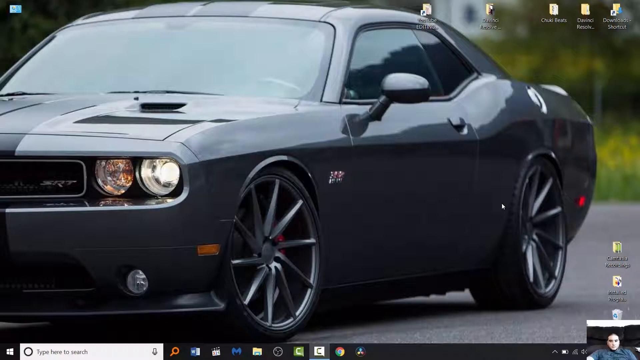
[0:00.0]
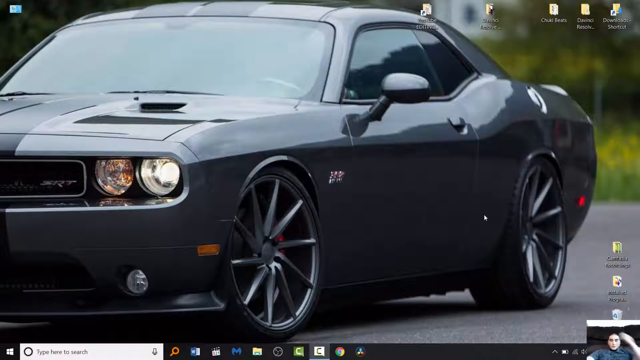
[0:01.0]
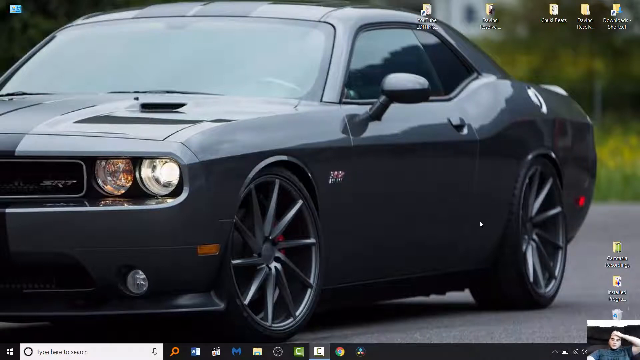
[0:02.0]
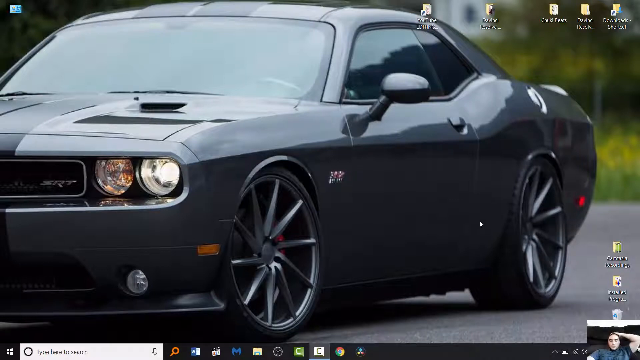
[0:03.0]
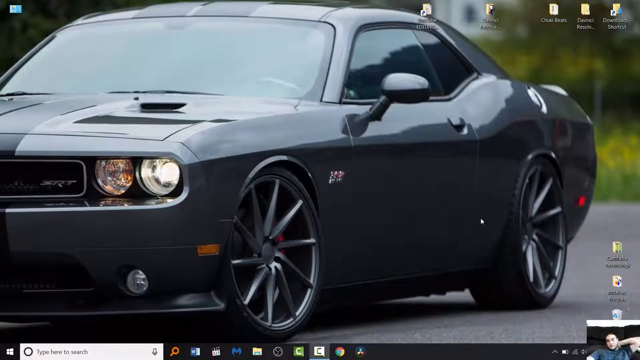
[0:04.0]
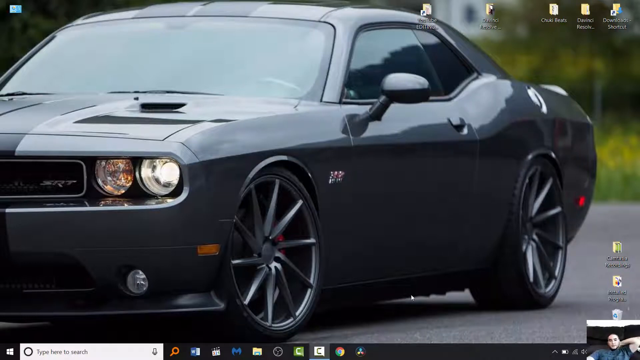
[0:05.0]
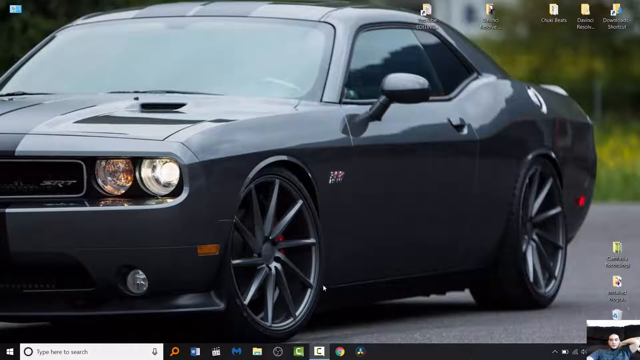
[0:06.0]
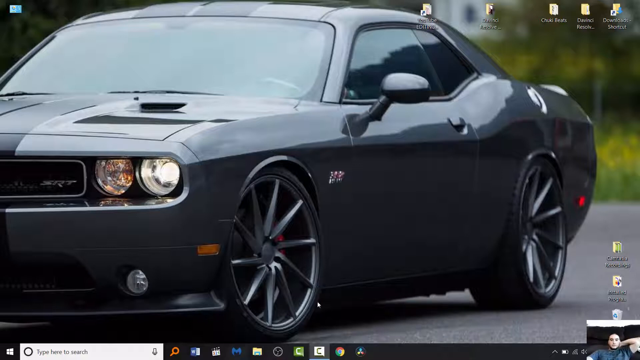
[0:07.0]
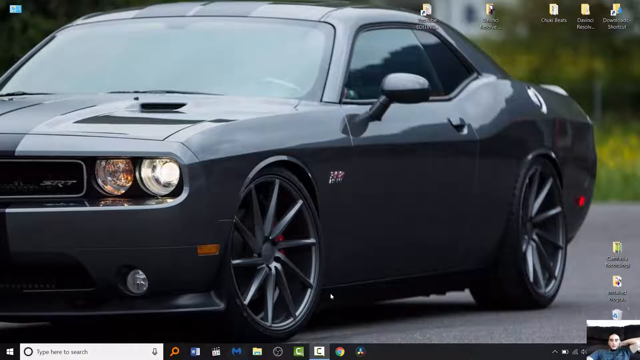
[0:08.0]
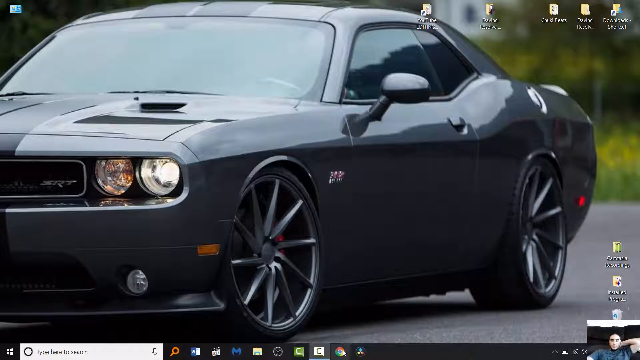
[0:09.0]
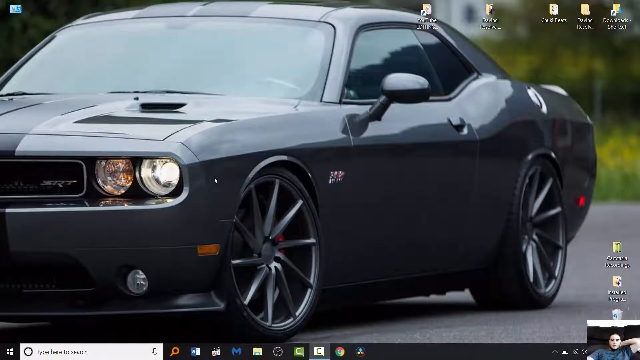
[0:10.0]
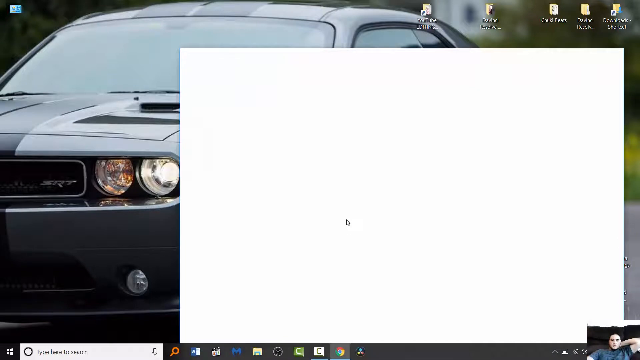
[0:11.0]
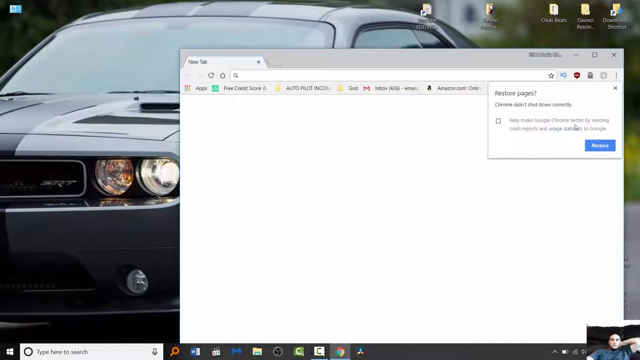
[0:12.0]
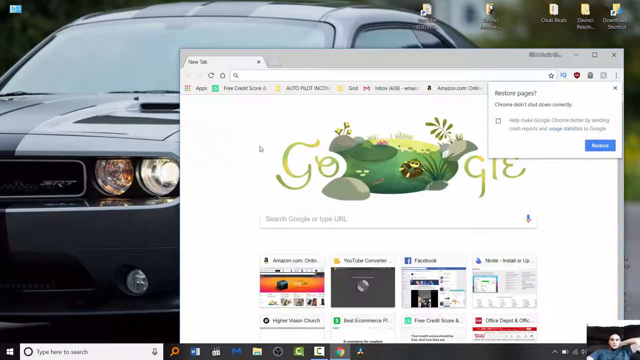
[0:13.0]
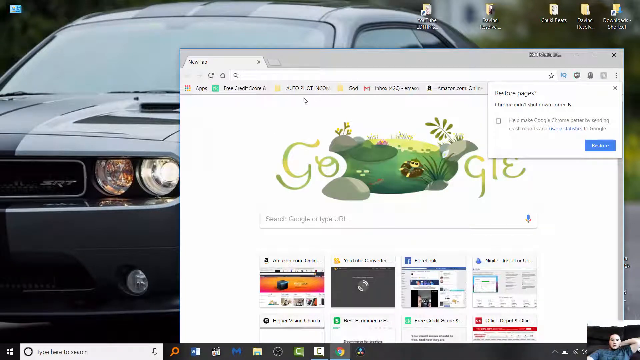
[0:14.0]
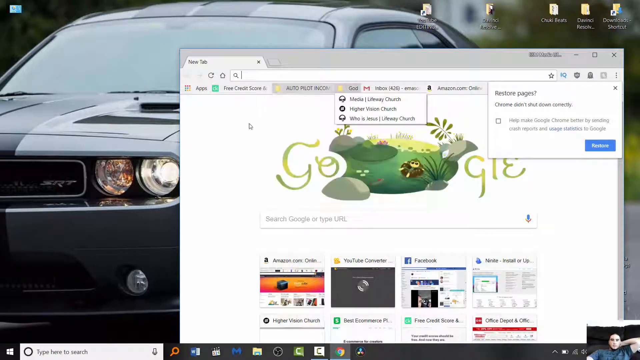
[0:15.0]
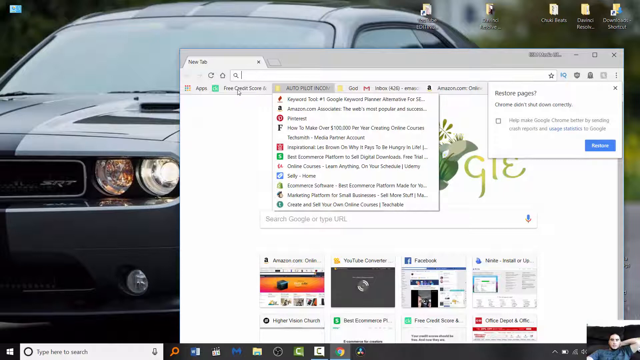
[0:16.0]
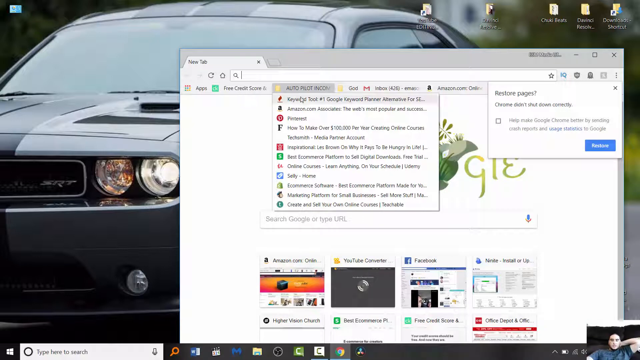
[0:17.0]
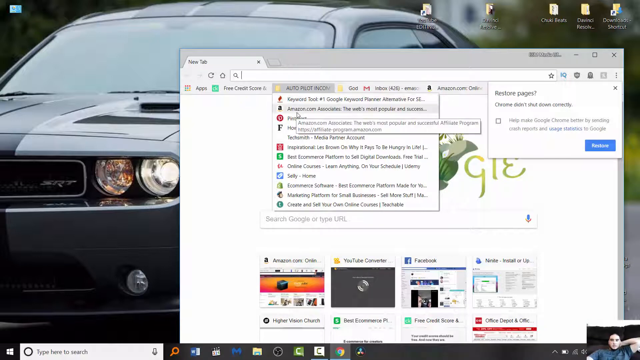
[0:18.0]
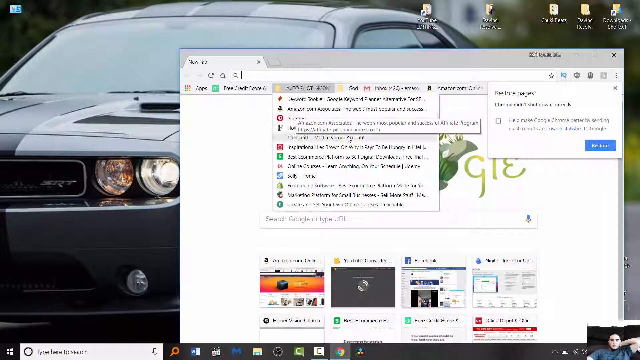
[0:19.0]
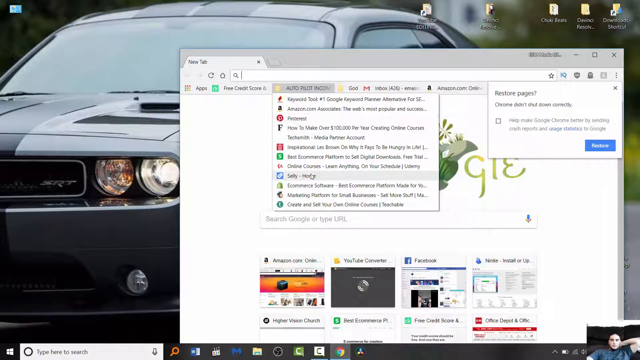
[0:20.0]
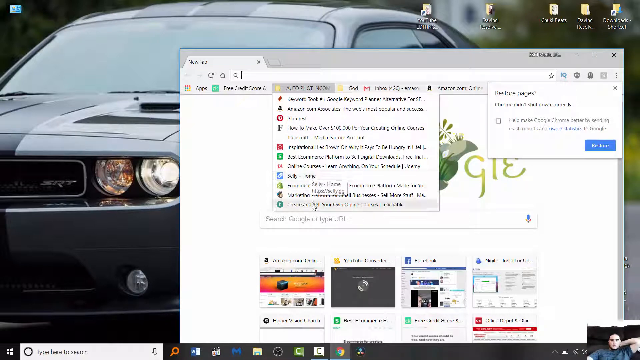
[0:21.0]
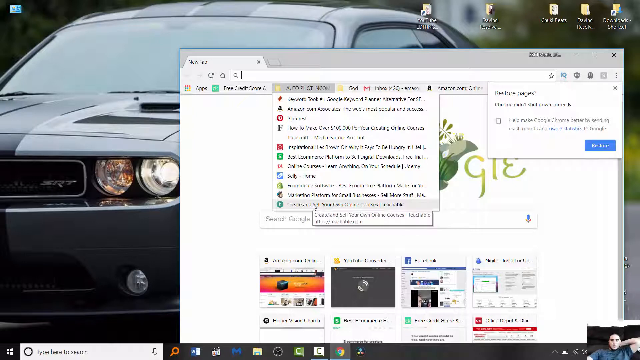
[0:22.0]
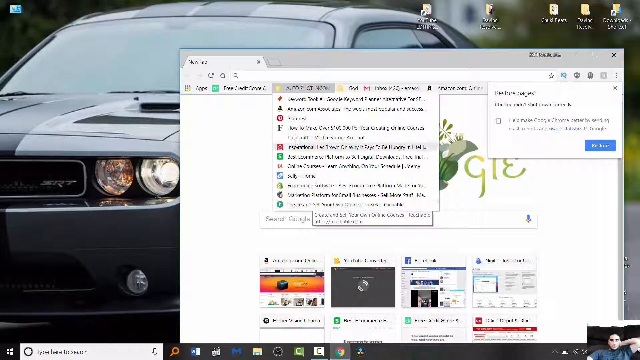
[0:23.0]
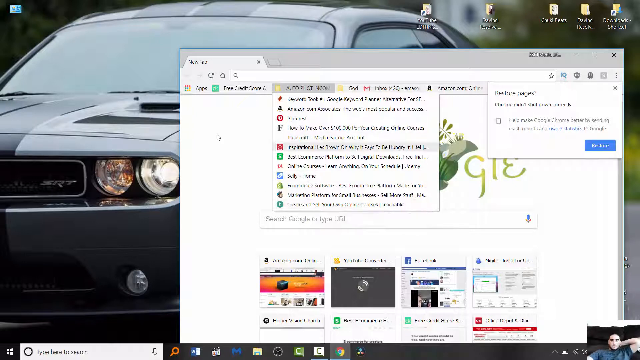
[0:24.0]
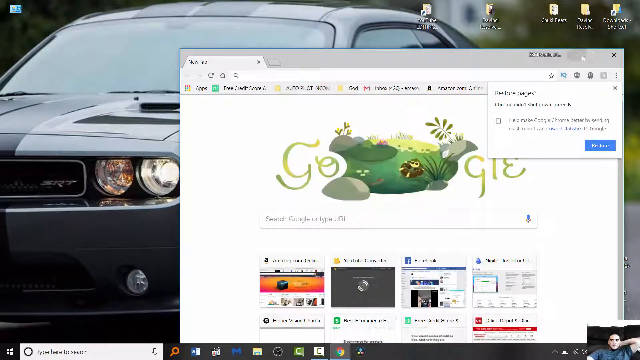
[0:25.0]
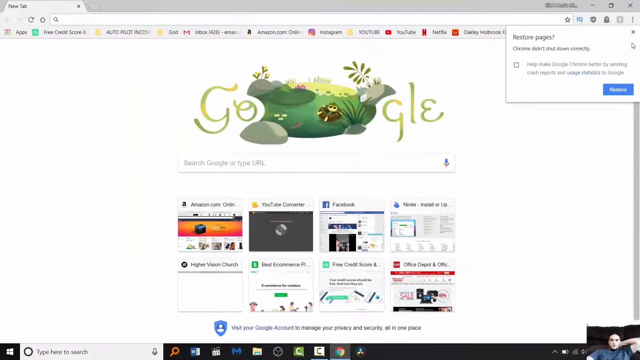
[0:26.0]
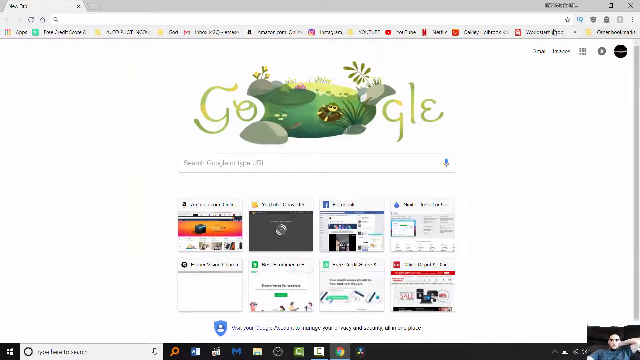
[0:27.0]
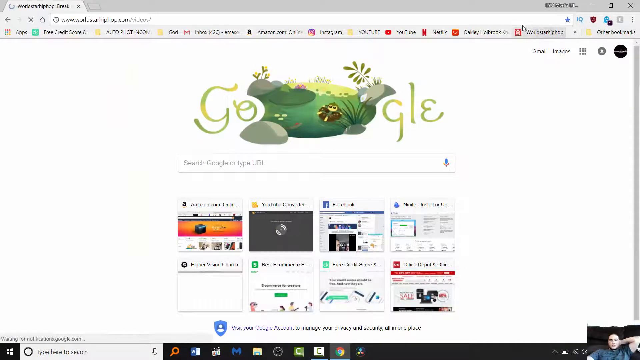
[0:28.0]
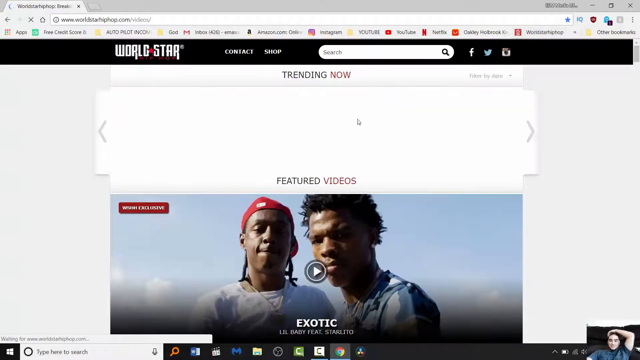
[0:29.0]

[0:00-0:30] A Caucasian man in a blue shirt appears at the bottom right of the screen, seated slanting backwards on a chair with his left hand at the back of his head, looking at a screen. The rest of the screen shows a screen share of a computer. The home screen wallpaper shows a gray car that seems new and is shiny, parked on a gray pavement with green vegetation behind it. At the bottom of the screen is the task manager, with a Microsoft Word icon, a video player icon, a files icon and a Chrome icon. The man moves the pointer, hovers it above the Chrome icon and clicks. A browser screen appears; he clicks on the autopilot tab and hovers above the options. He then hovers above the minimize button and clicks the maximize button. A pop-up suggesting to restore pages appears at the top right of the screen, and the man clicks cancel.